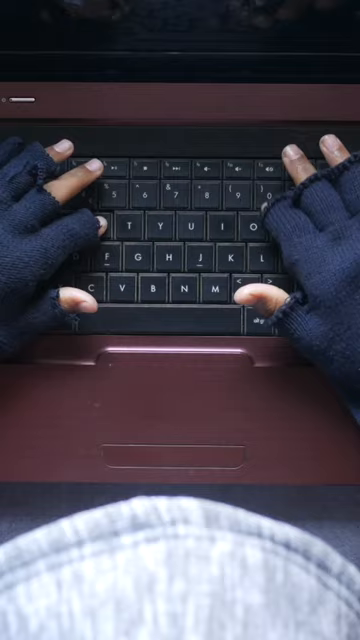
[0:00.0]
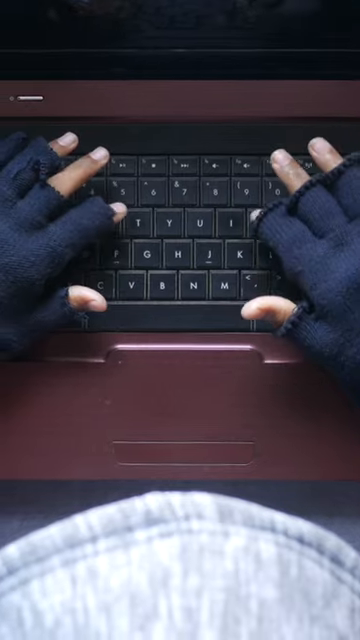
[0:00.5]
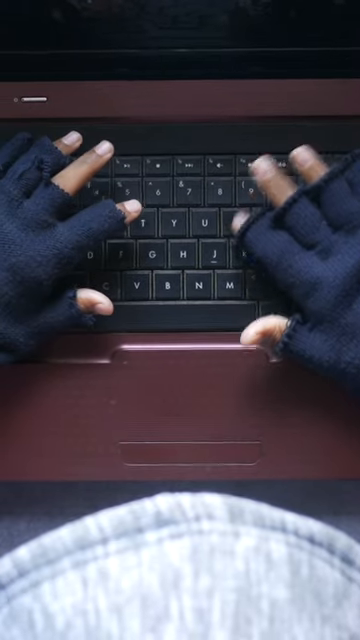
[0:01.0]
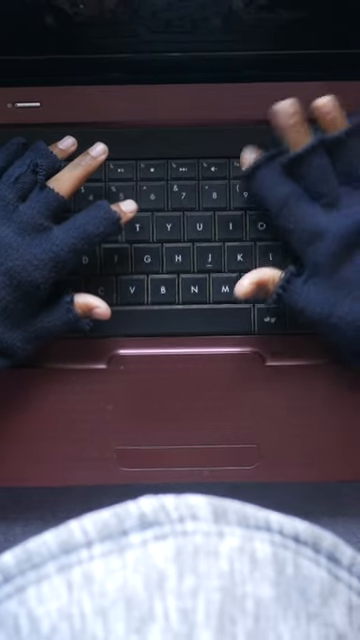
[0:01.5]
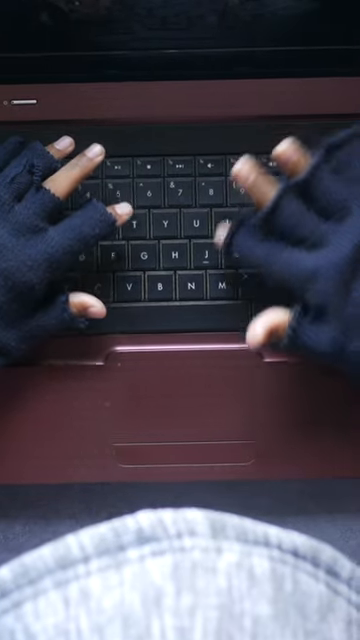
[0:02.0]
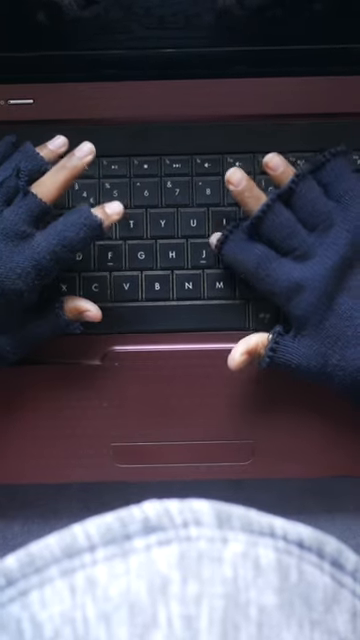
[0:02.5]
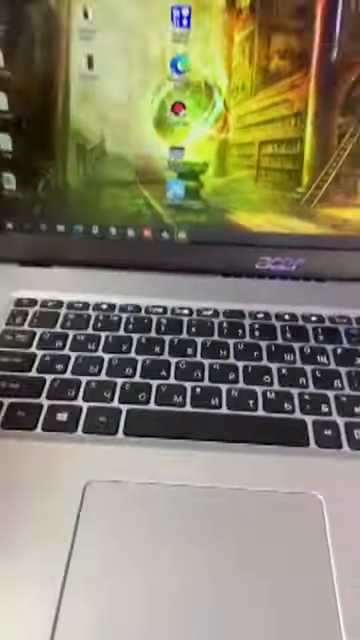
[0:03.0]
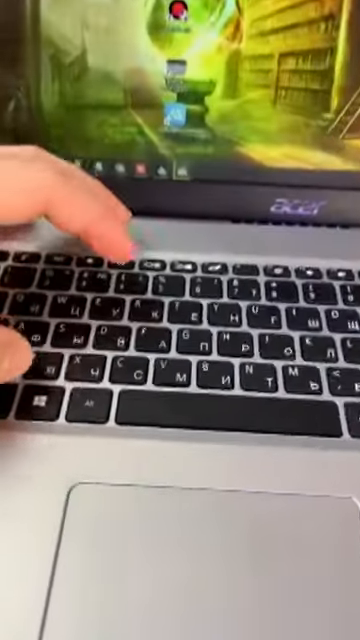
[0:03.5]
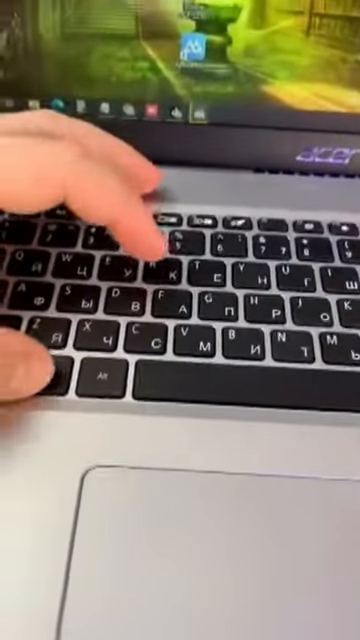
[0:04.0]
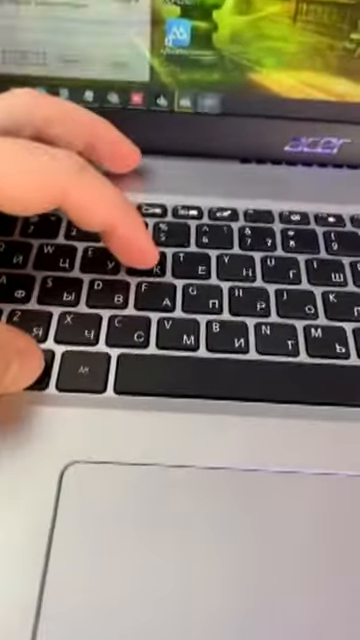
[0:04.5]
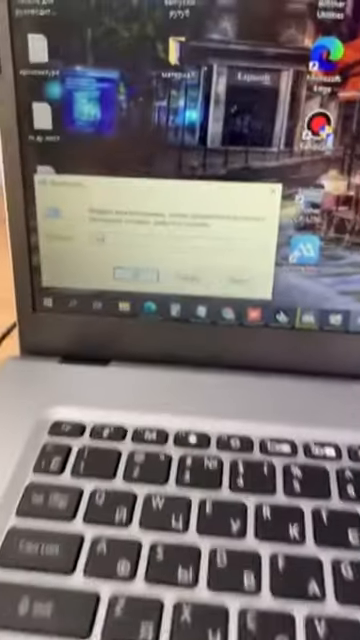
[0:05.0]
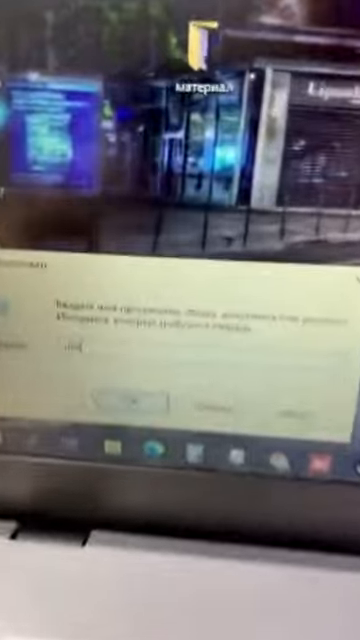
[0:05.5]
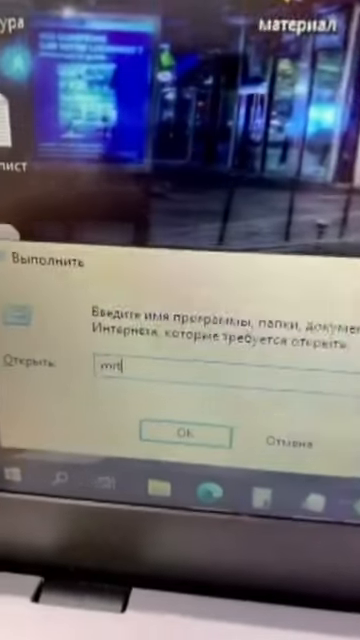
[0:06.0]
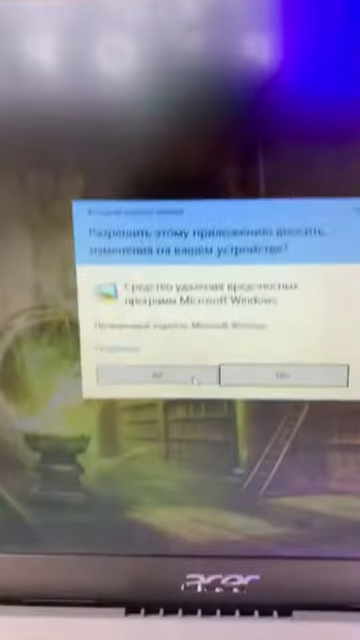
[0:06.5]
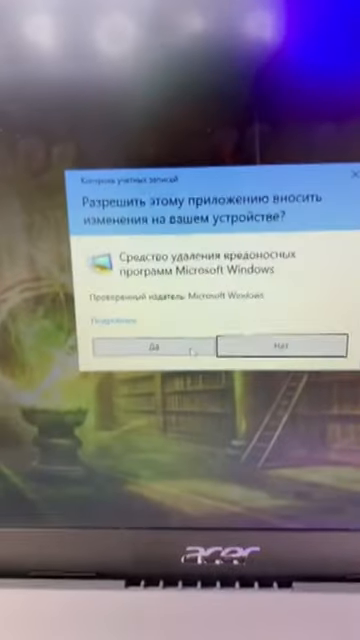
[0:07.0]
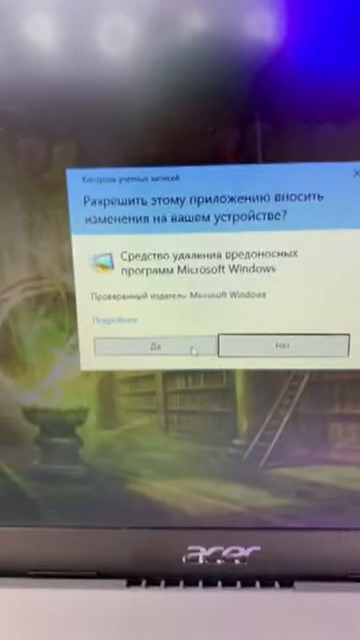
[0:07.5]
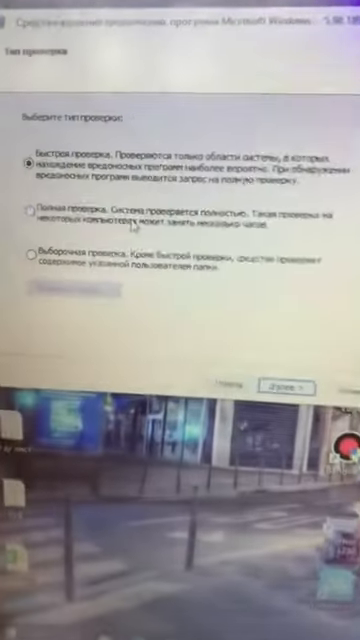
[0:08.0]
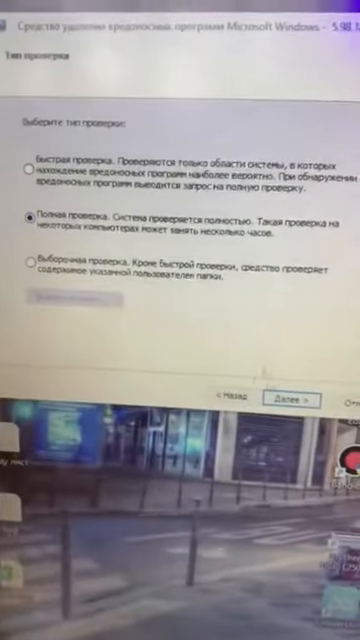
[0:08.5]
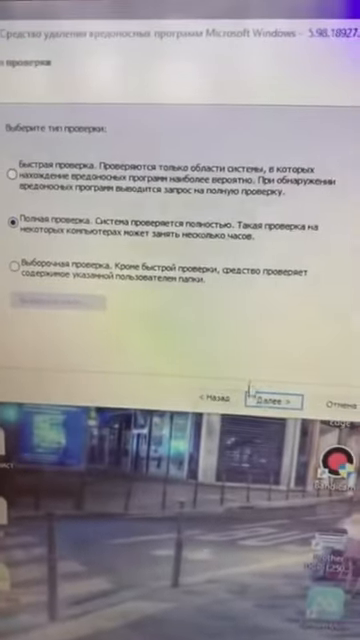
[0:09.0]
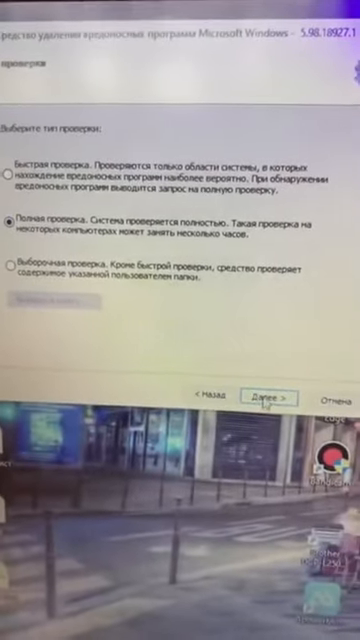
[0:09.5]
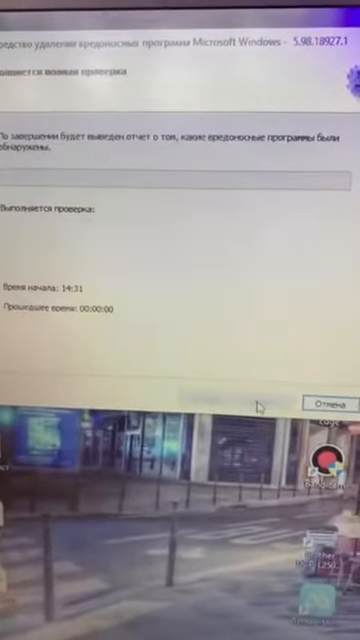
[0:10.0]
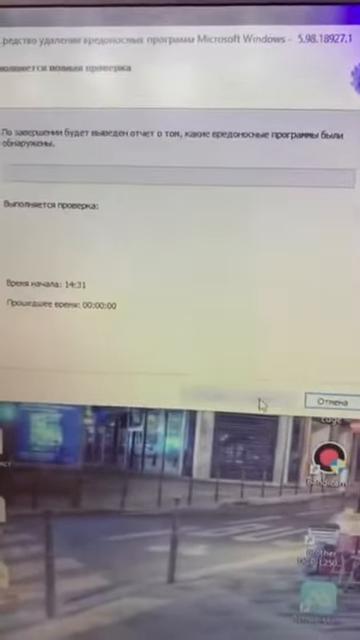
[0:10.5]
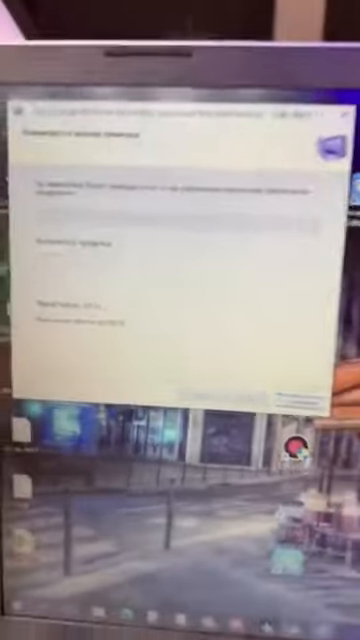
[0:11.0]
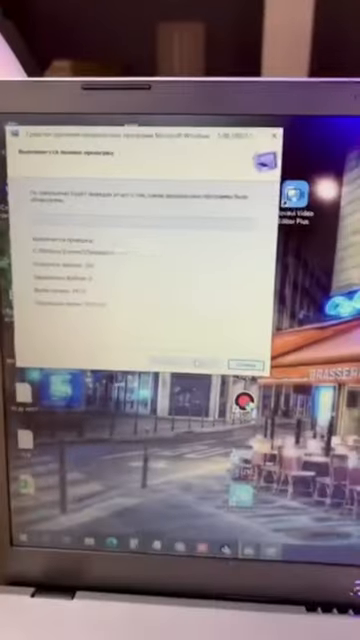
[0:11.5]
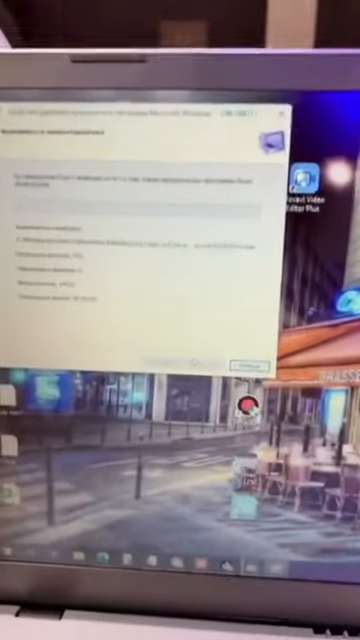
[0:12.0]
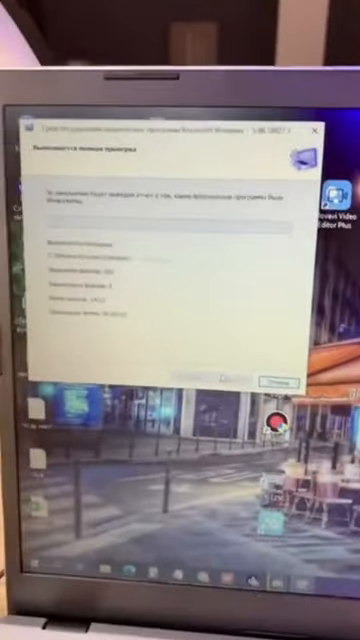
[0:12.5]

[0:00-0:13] A point-of-view shot looks down on a black keyboard against a dark wood desk. Two hands wearing fingerless black gloves are on the keyboard, typing; the hands have a mid-to-darker complexion and neat pink nails, and they look feminine. The video then jumps to an open laptop, where a Caucasian hand comes onto the laptop and begins typing with just the left hand. The laptop screen shows a green scenic screensaver. After the hand types, the camera zooms in on what look to be different error messages, possibly some kind of system messages from the laptop, written in a foreign language with unfamiliar letters that looks to be something like Russian or Ukrainian. They look like pop-up windows from Microsoft Windows, and different windows keep popping up on the laptop. On a different laptop, the bottom buttons of two or three of these message windows are clicked to close them.